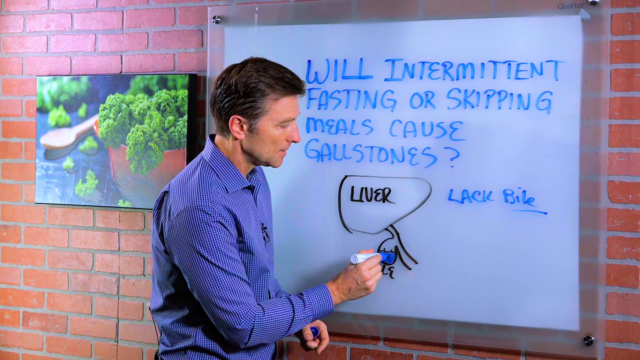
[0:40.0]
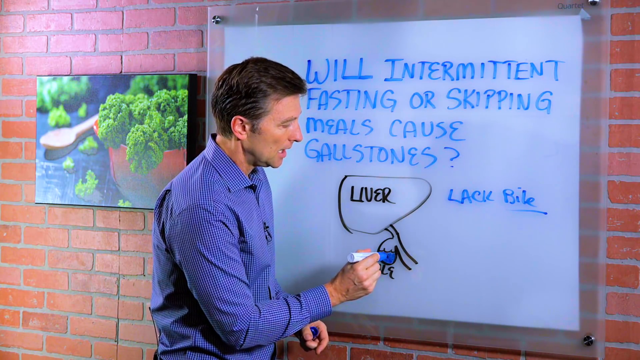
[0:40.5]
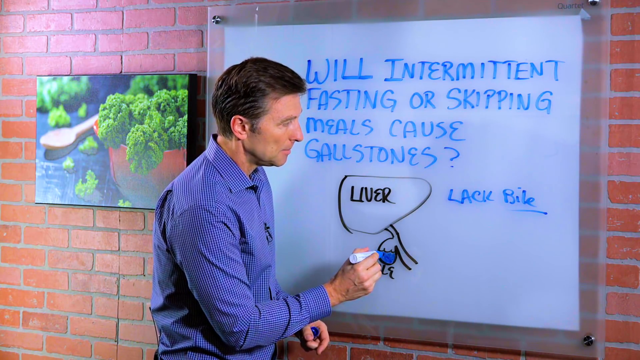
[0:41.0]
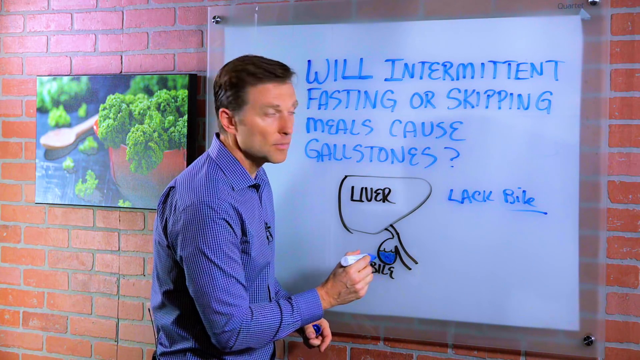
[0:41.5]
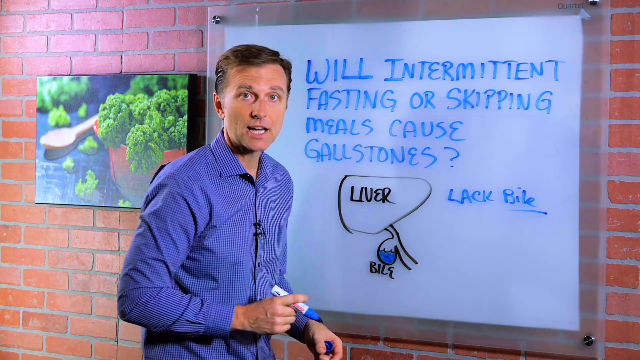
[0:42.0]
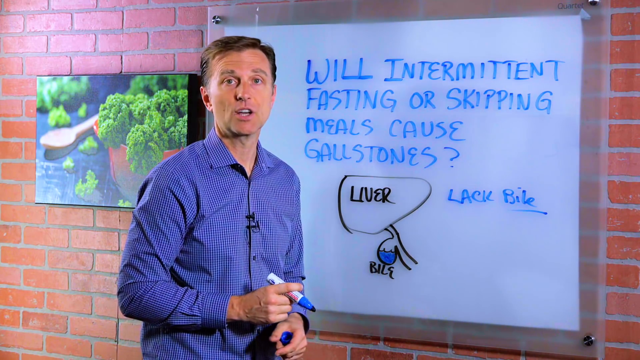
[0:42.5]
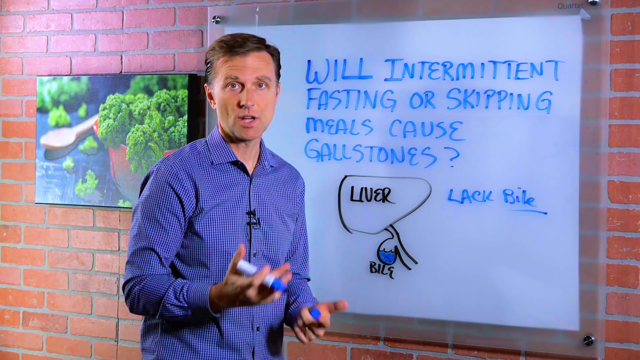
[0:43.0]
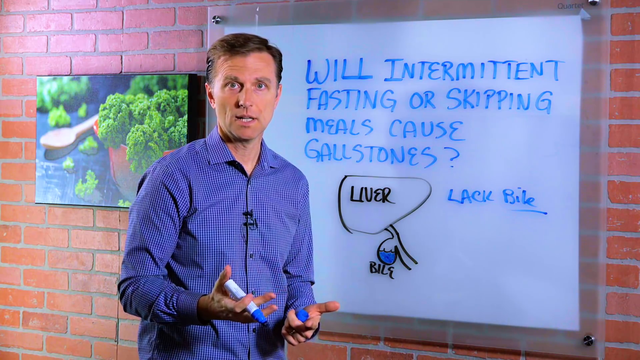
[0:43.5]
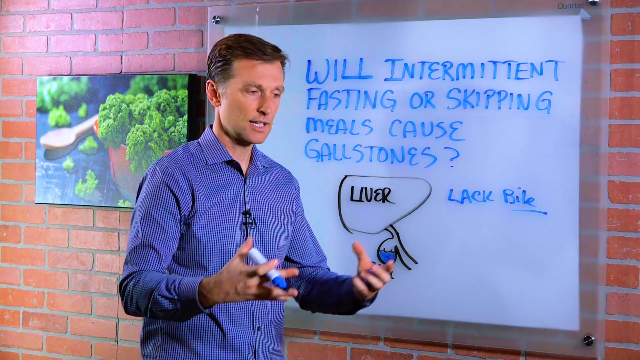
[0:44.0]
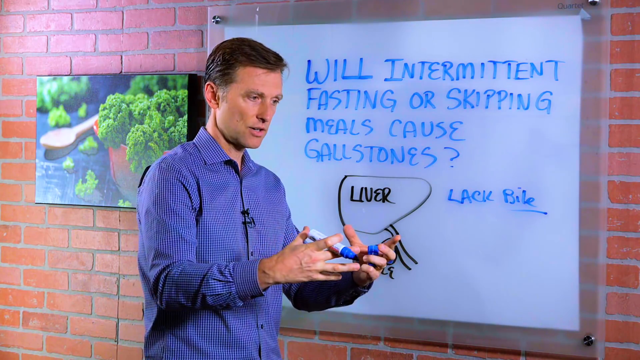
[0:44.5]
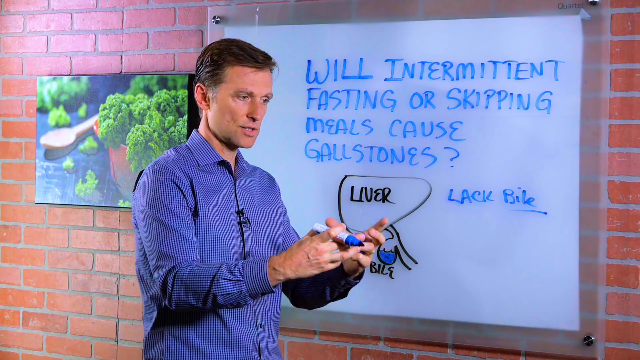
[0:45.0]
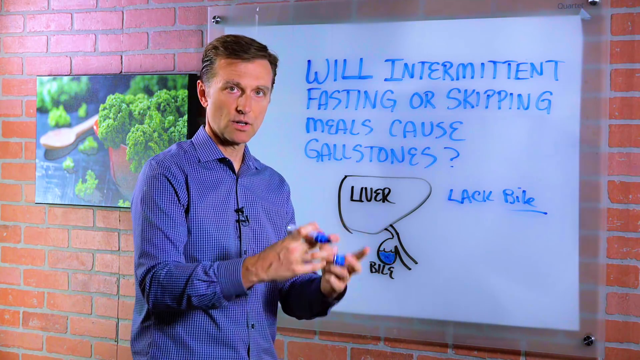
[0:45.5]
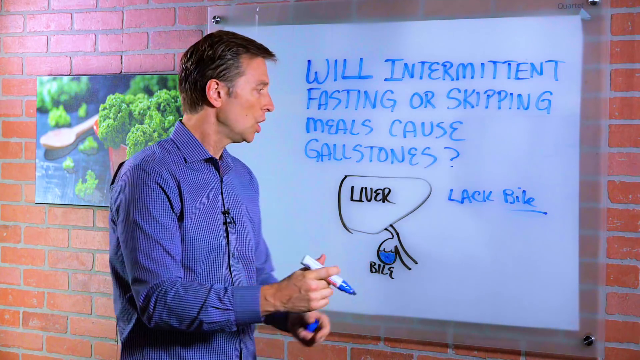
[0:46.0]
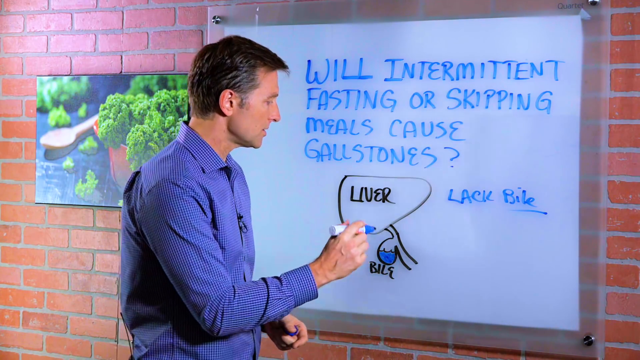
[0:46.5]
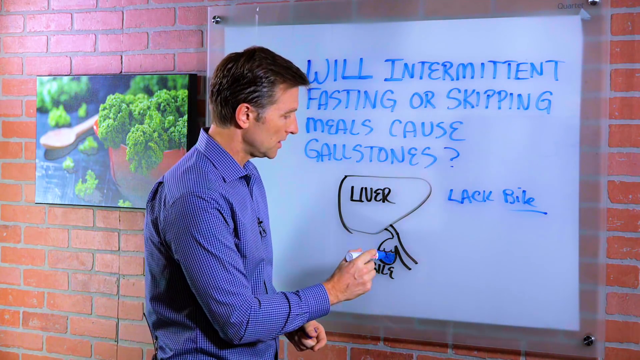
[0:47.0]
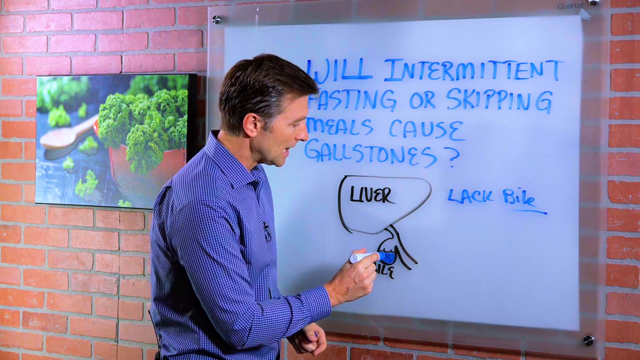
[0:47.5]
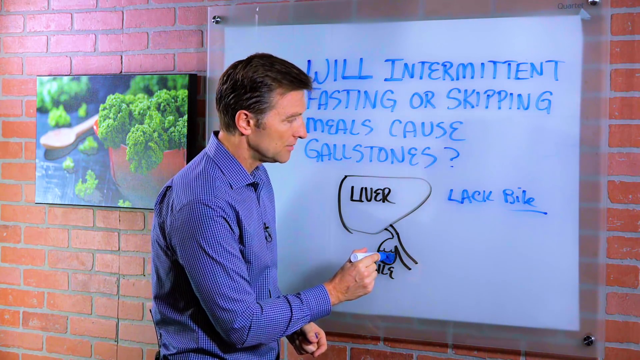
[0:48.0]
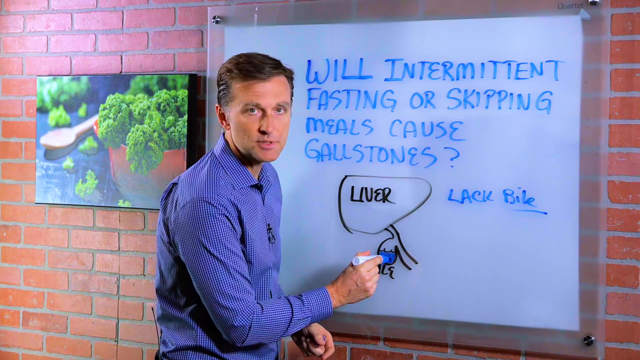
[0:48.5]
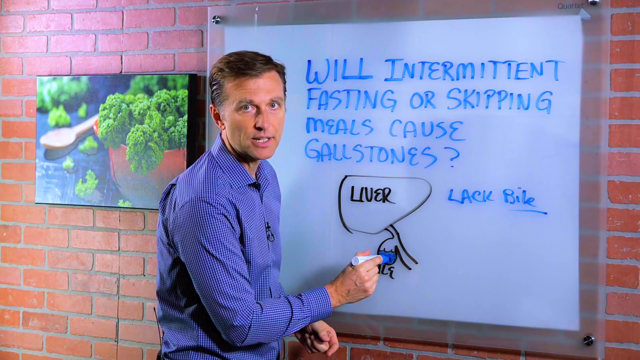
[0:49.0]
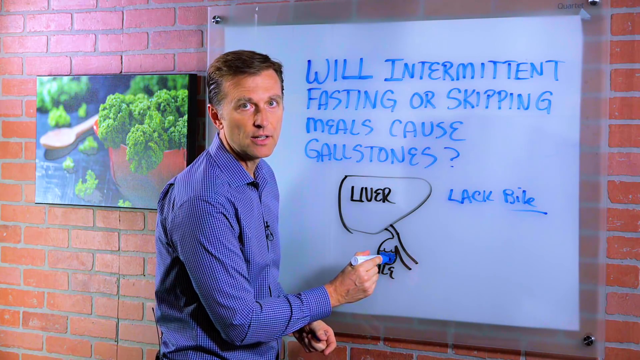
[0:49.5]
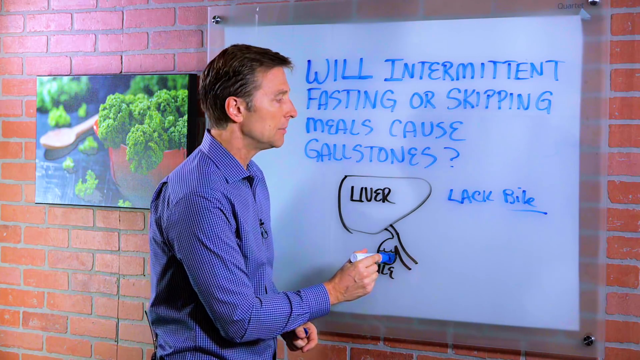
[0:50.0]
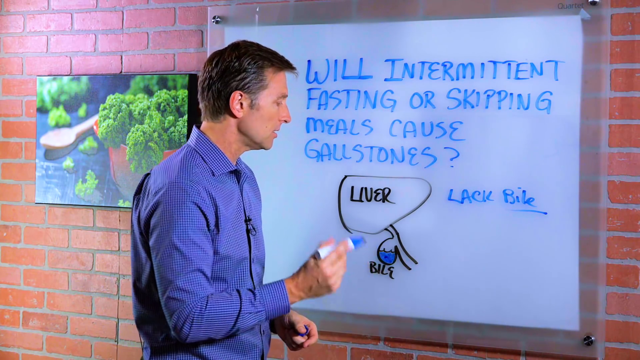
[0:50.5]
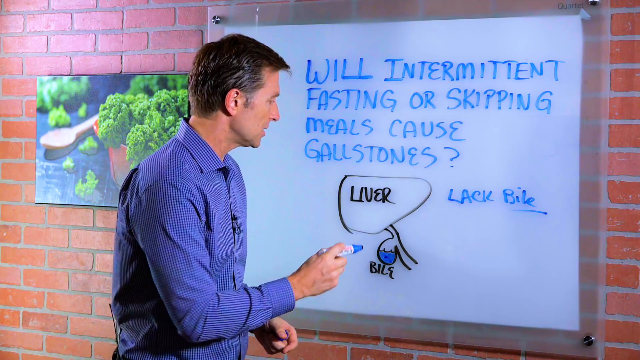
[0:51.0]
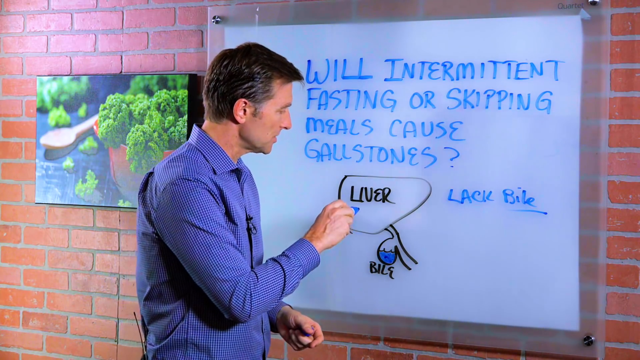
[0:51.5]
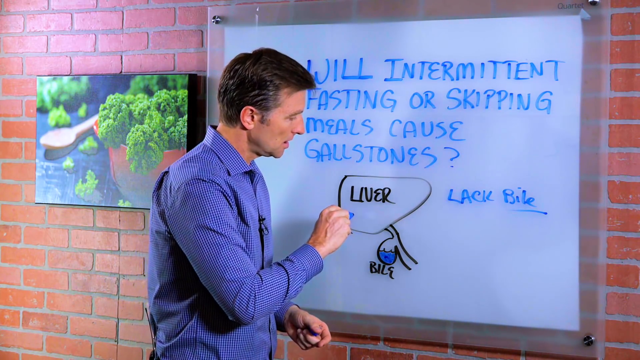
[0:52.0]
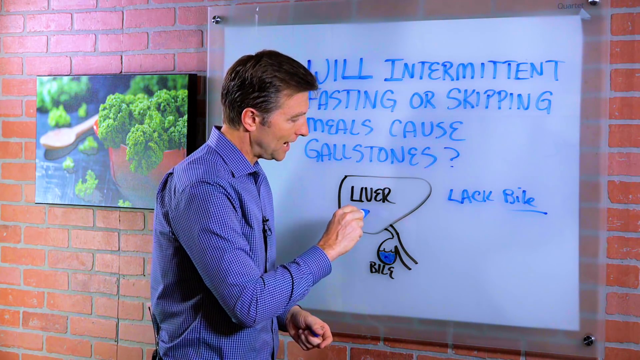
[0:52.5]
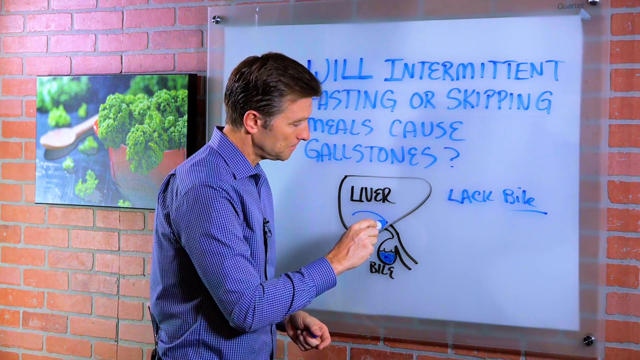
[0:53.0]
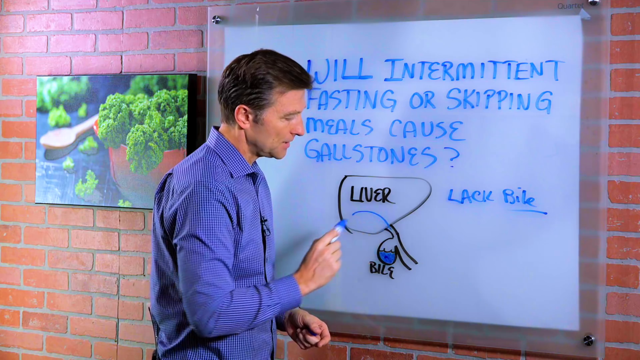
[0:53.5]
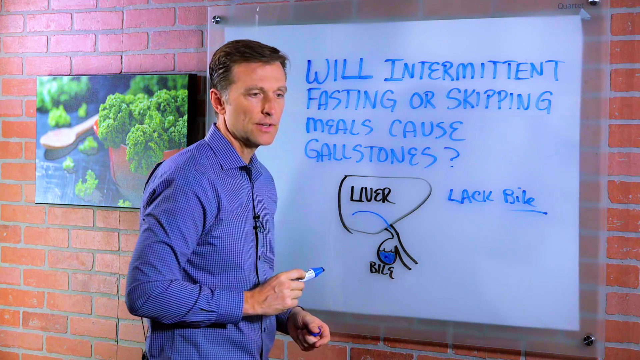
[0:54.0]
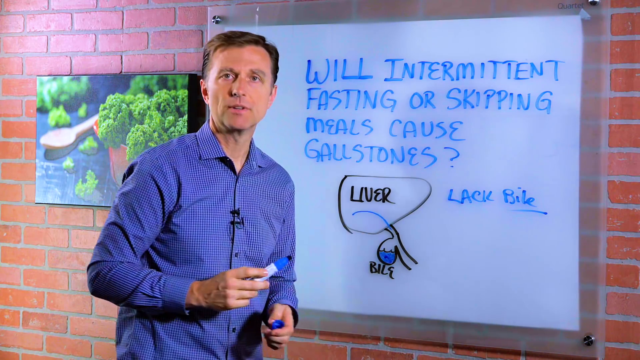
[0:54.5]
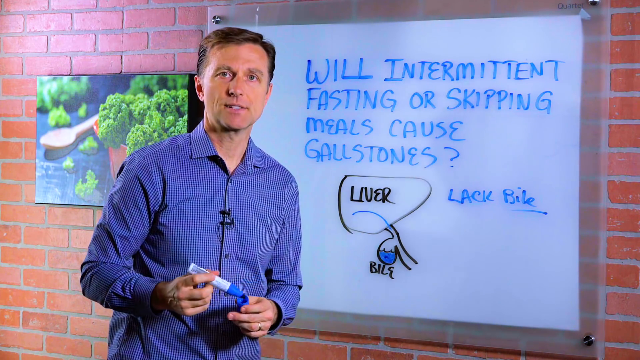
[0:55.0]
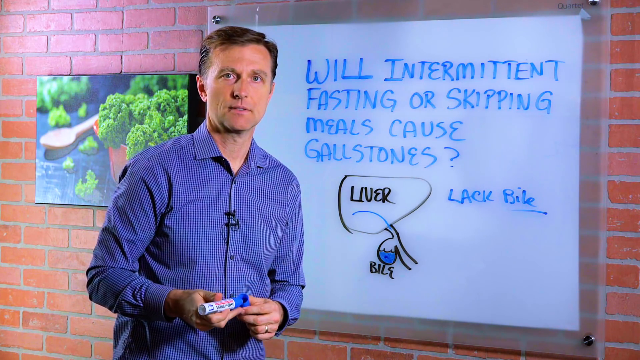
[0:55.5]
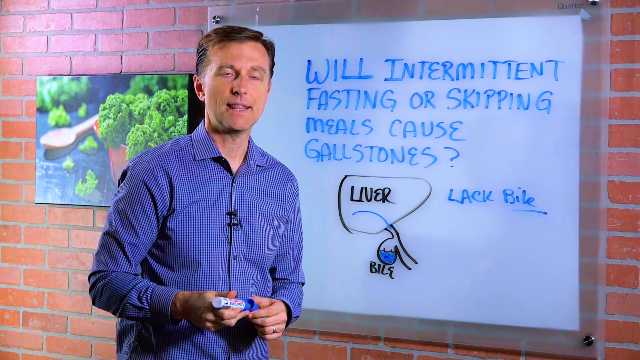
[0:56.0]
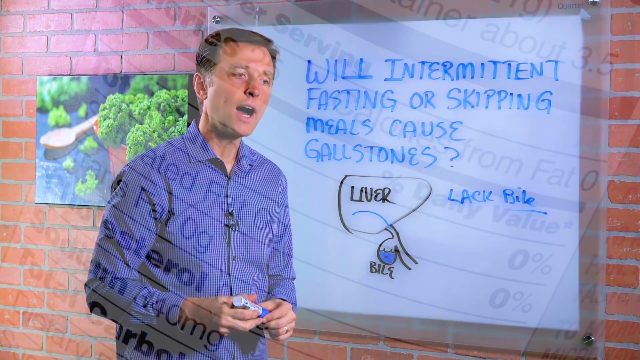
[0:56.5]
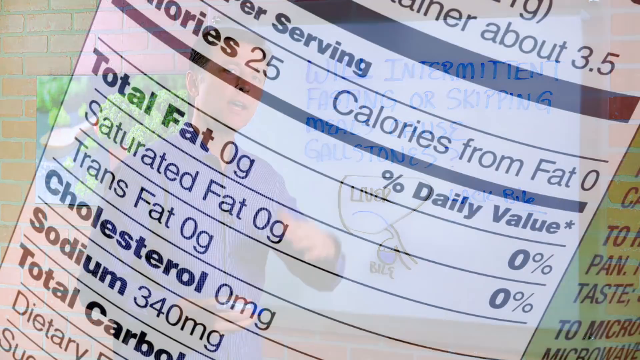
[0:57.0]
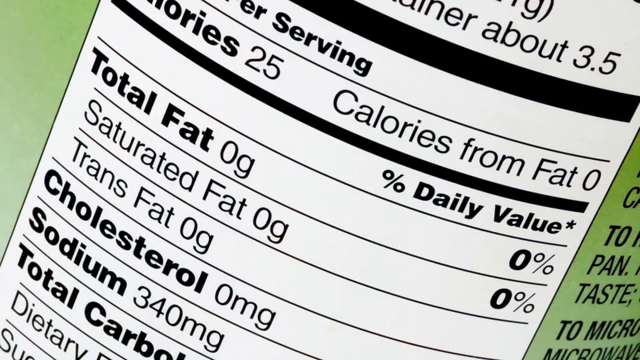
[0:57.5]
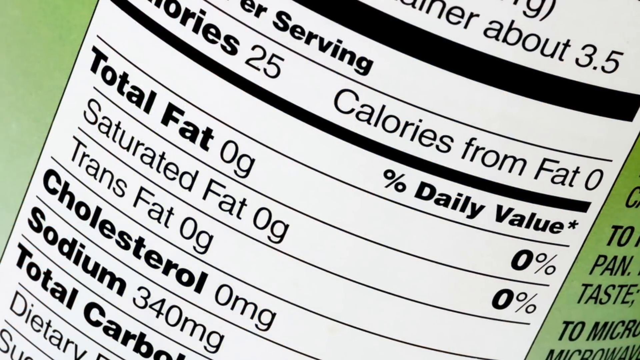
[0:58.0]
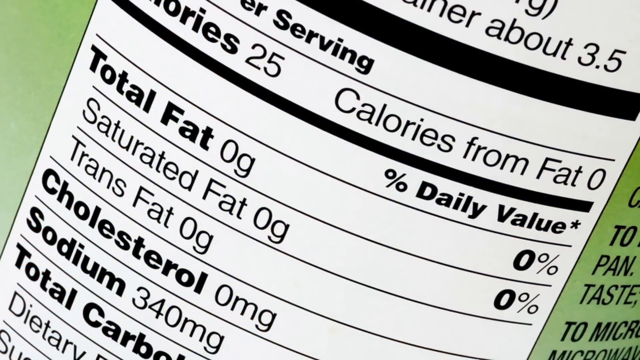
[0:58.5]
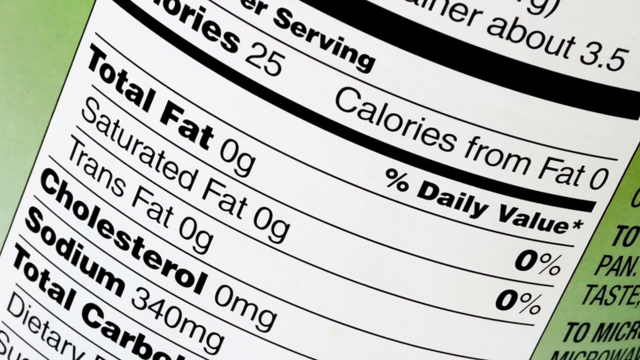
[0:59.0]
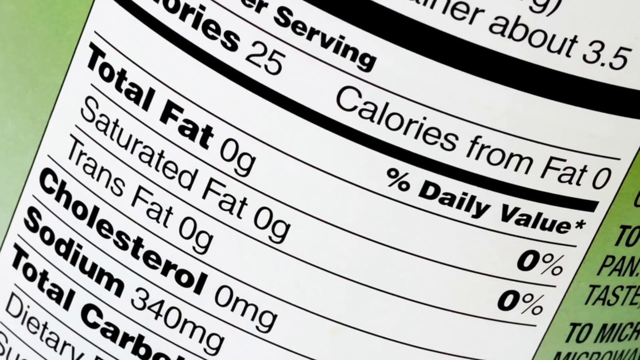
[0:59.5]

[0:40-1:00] The man in the blue shirt stands in front of the whiteboard, with the red brick background and the picture of broccoli. The whiteboard says "will intermittent fasting or skipping meals cause gallstones", "liver" and "lack of bile", with "bile" underlined, alongside his drawing of the liver and the bile duct. He points at the liver and draws a blue line going into what seems to be the tract between the liver and the bile duct. As he talks, a nutrition label comes up on the screen; the label itself is green, while the nutrition block is black and white. It lists servings per container about 3.5, calories 25, calories from fat 0, total fat 0, saturated fat 0, trans fat 0, cholesterol 0 mg and sodium 340 milligrams.